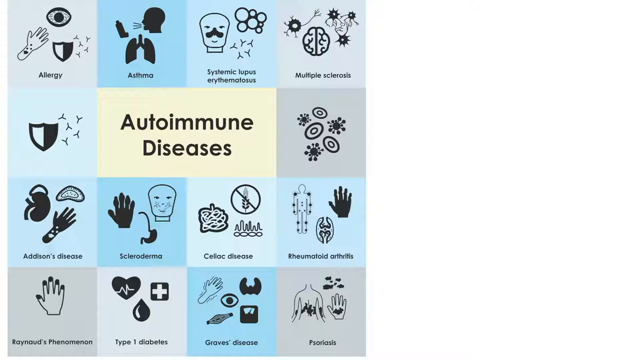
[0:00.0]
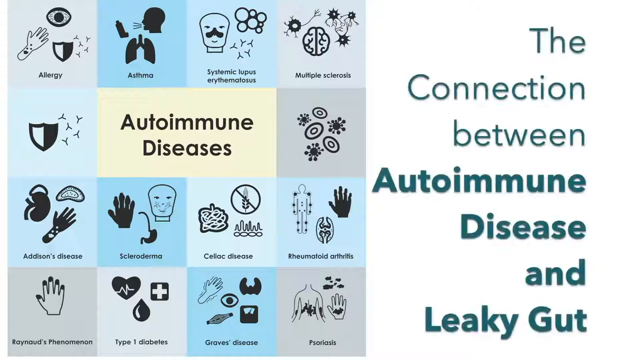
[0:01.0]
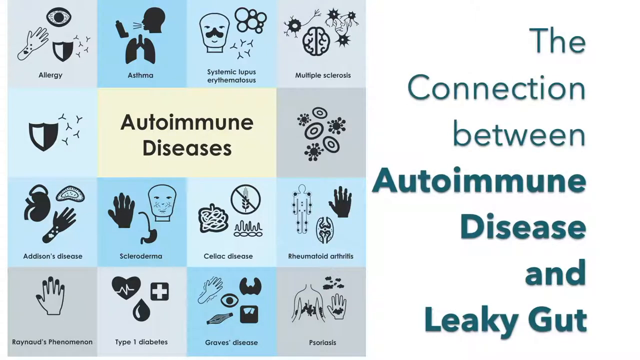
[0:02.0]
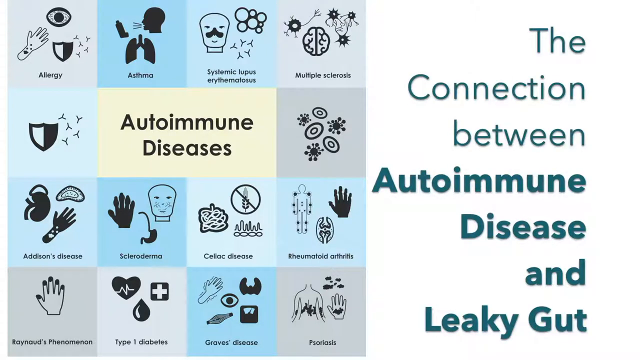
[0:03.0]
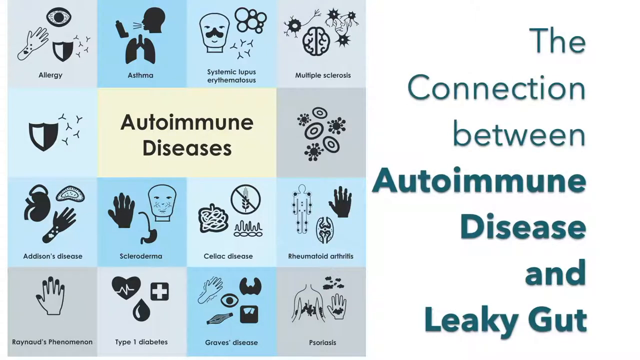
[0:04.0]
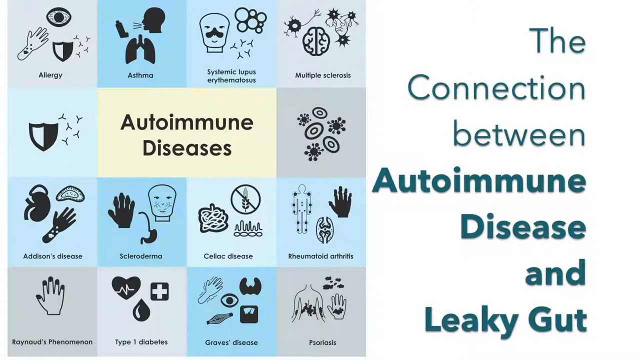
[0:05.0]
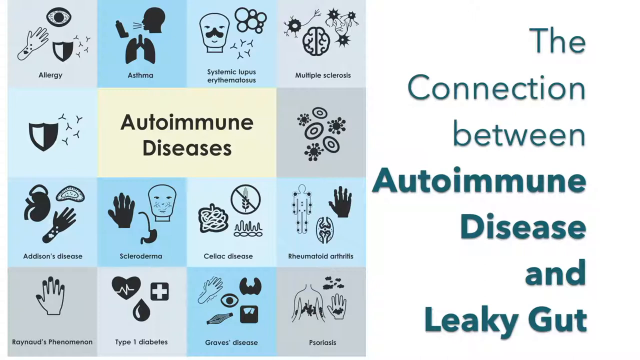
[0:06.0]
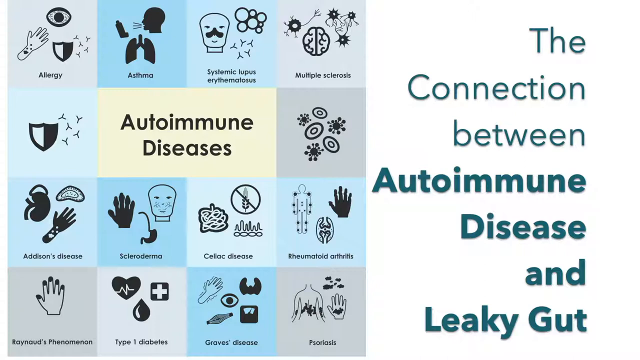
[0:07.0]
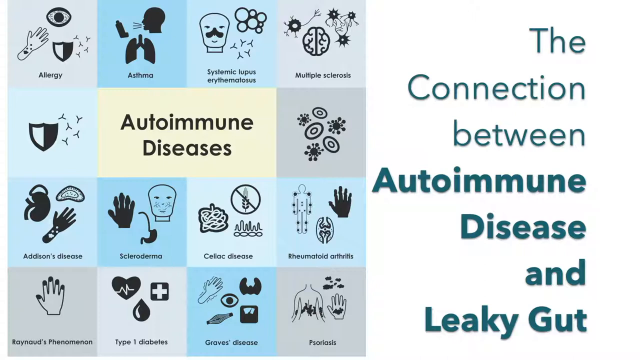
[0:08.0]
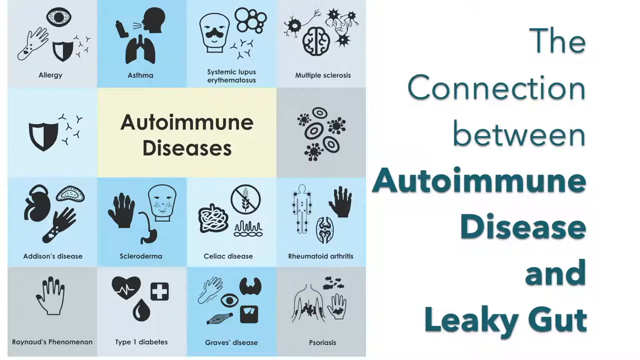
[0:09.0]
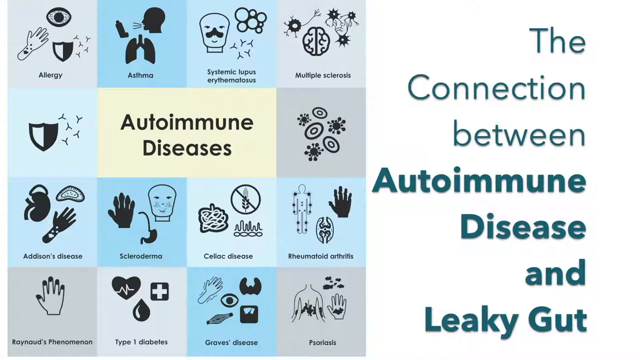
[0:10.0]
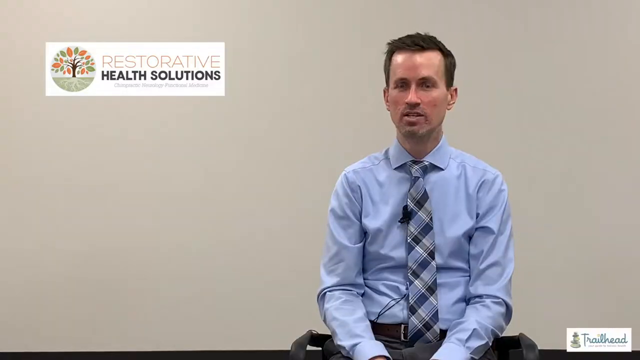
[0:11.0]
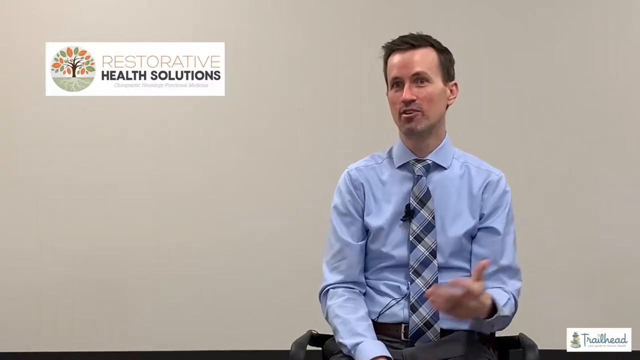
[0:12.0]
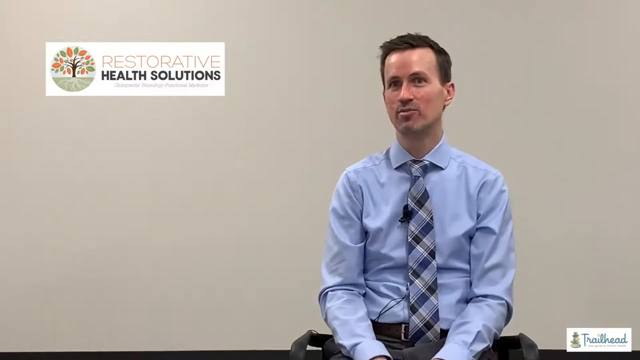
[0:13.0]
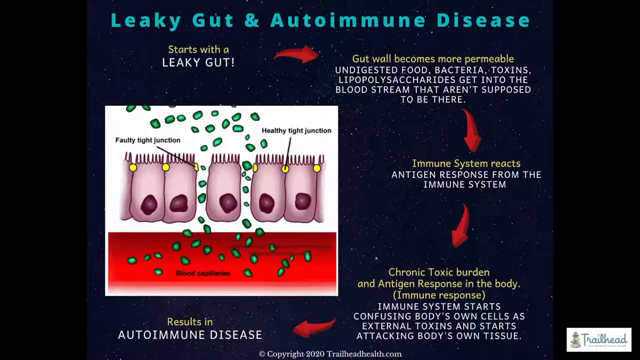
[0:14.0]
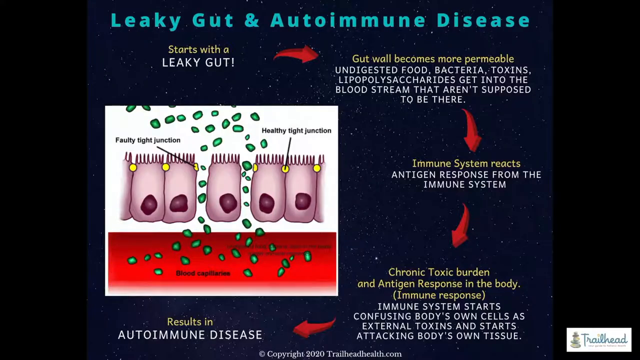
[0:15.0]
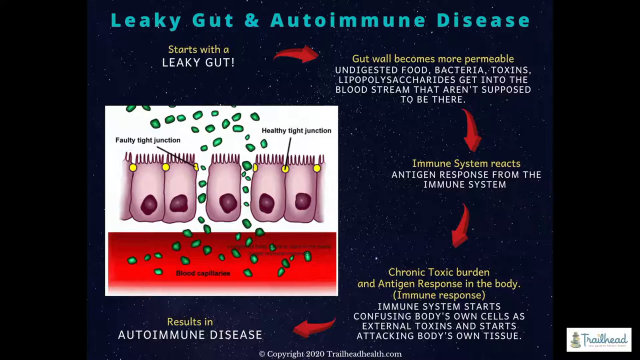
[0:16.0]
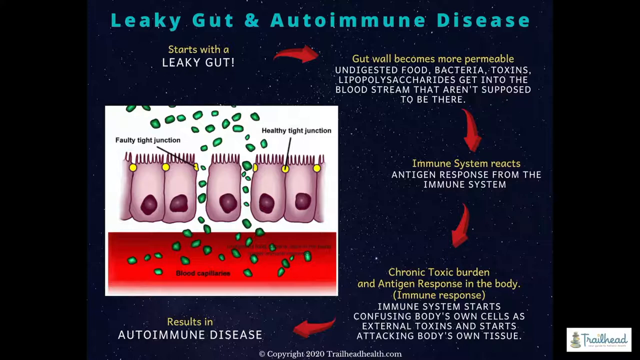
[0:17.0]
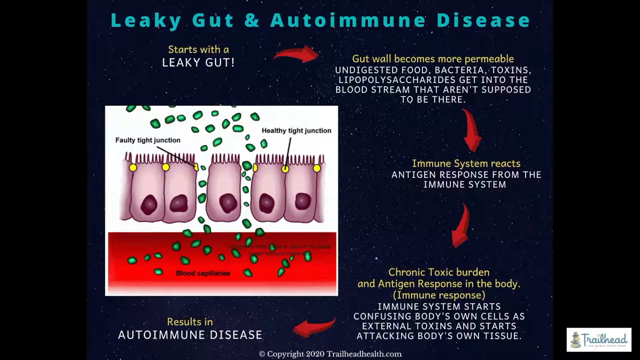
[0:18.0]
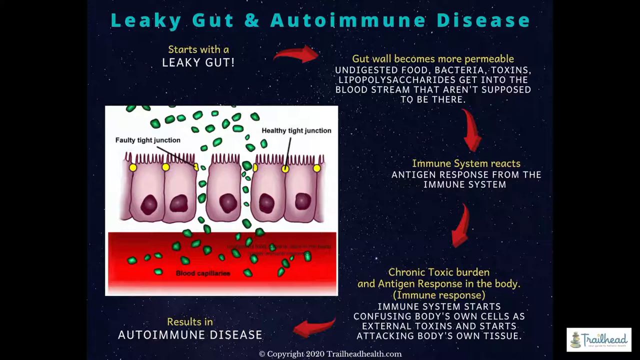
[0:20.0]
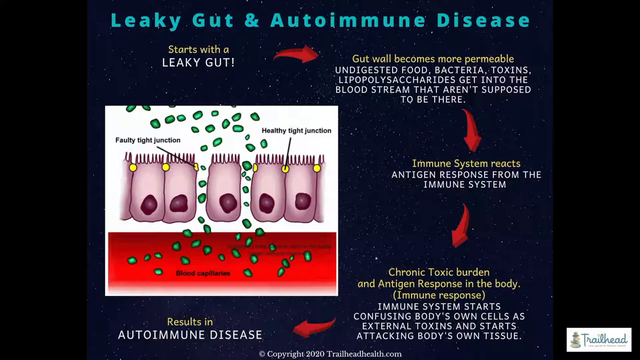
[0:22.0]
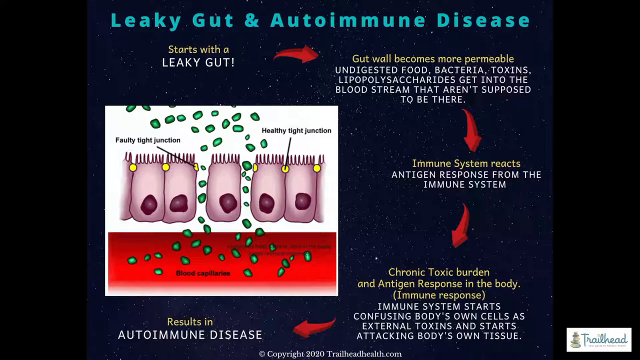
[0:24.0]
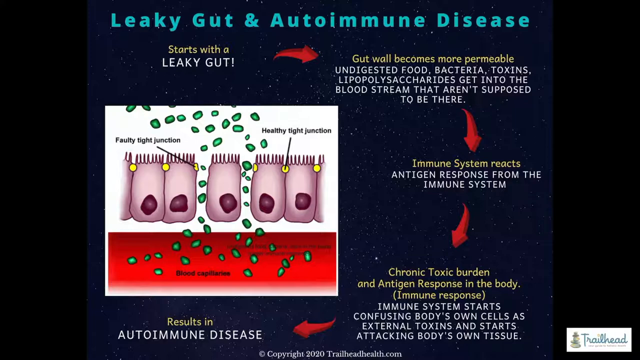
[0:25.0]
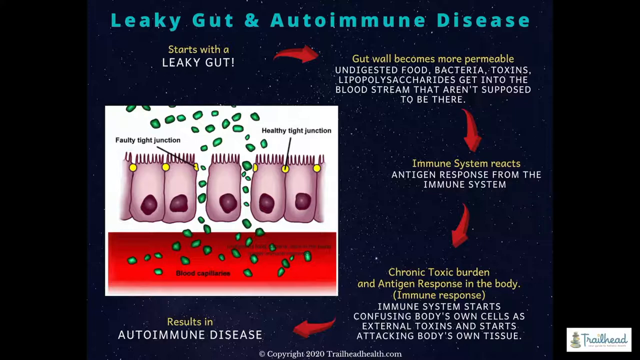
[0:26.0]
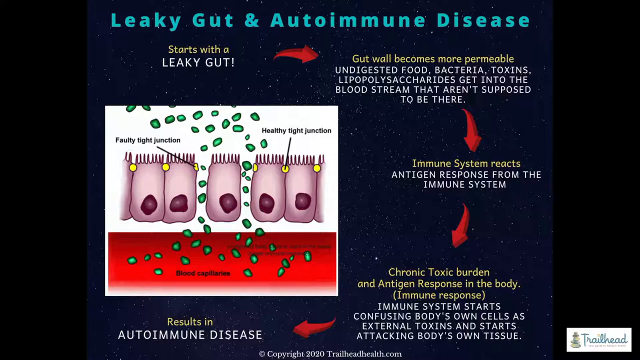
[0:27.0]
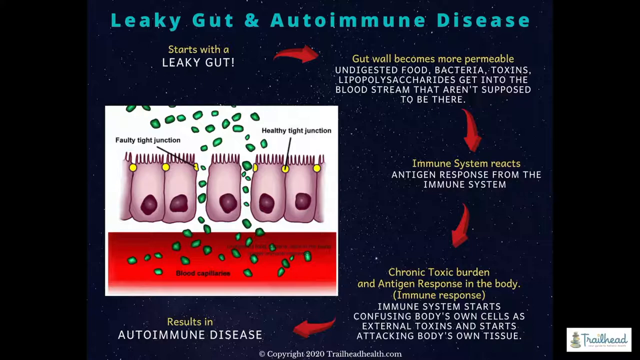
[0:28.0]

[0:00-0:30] The video appears to be a PowerPoint presentation about autoimmune disease. On the left is a diagram: in the center, a yellow block with black lettering reads "autoimmune diseases," and all around it are light gray, dark gray, light blue or dark blue boxes, each depicting an image of a different kind of autoimmune disease. On the right of the split screen is a gray box that says "the connection between autoimmune disease and a leaky gut." Later a man appears in front of a gray background, with "restorative health solutions" in the left-hand corner. He is apparently continuing the presentation on autoimmune disease and appears to be sitting in a chair or a stool of some sort, gesturing with his hands while he speaks.